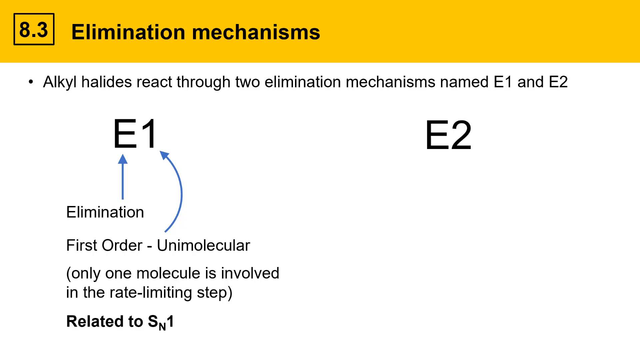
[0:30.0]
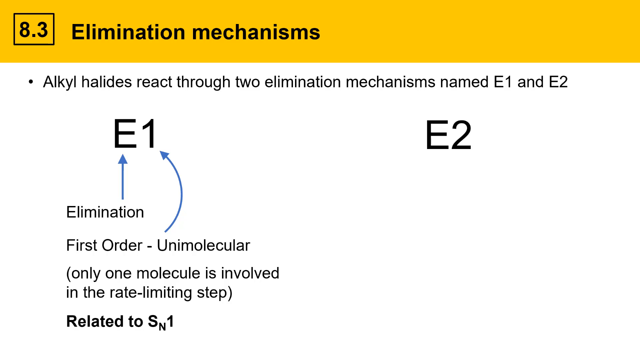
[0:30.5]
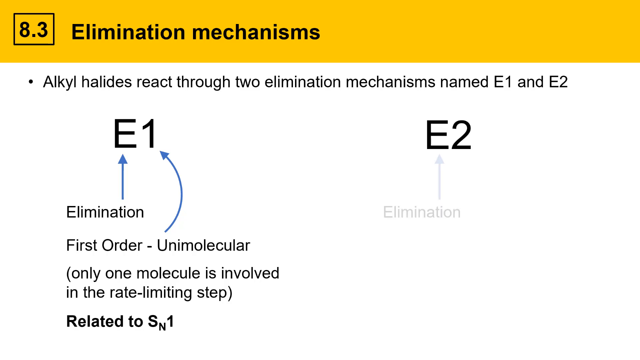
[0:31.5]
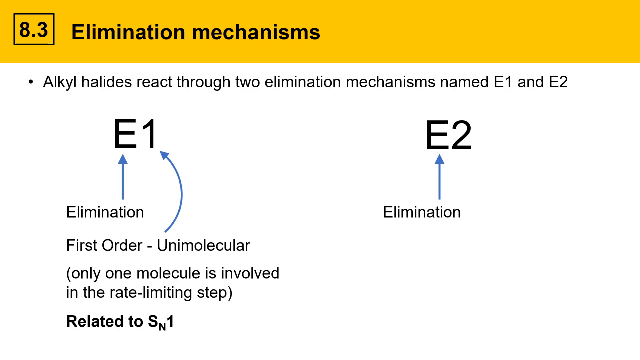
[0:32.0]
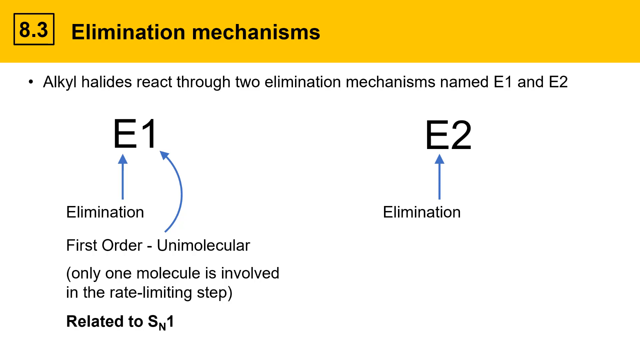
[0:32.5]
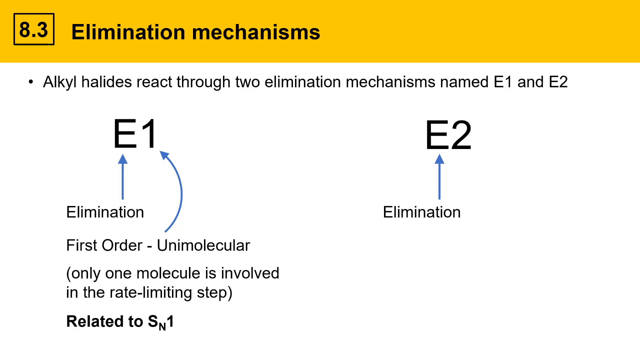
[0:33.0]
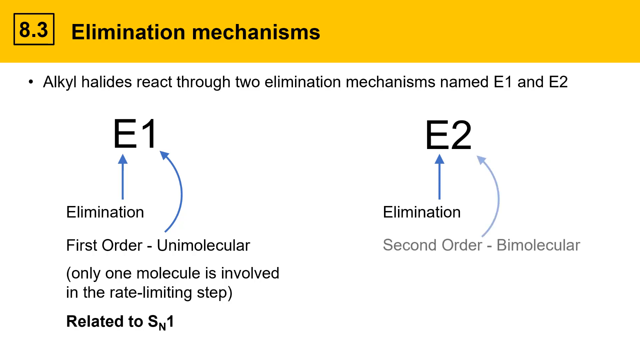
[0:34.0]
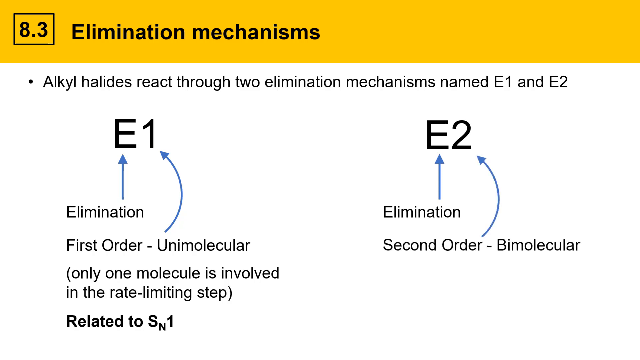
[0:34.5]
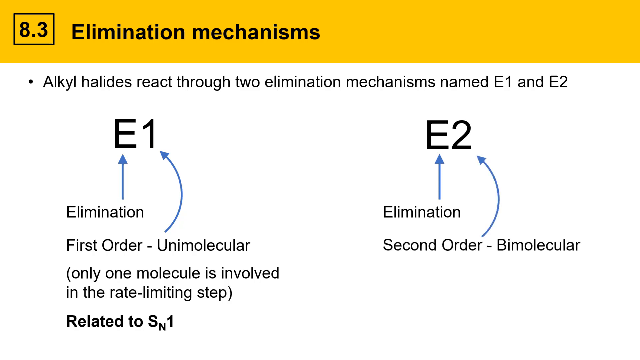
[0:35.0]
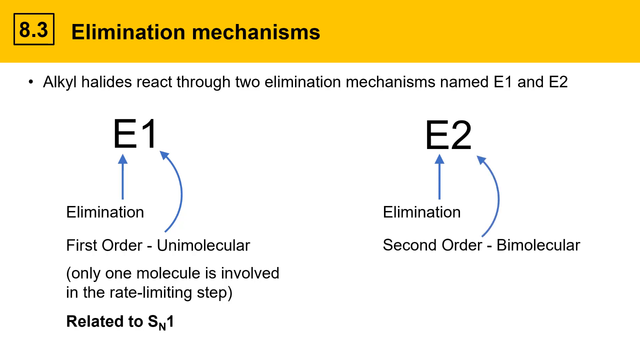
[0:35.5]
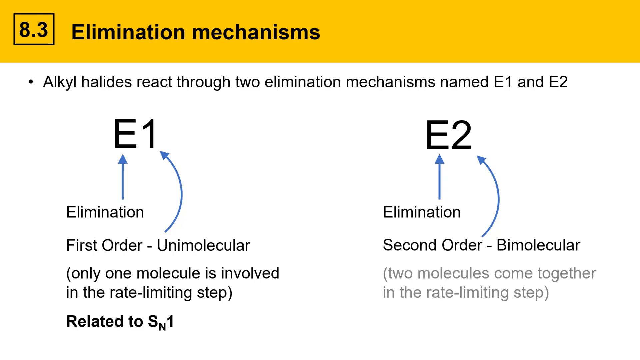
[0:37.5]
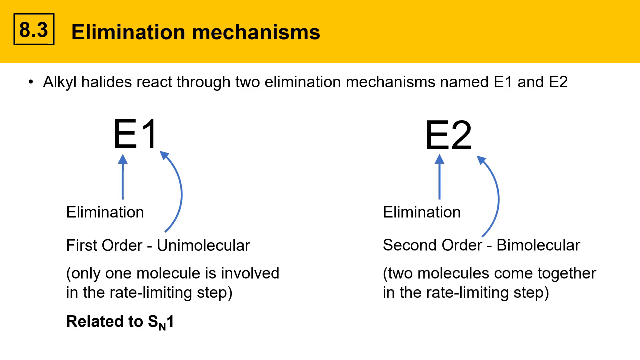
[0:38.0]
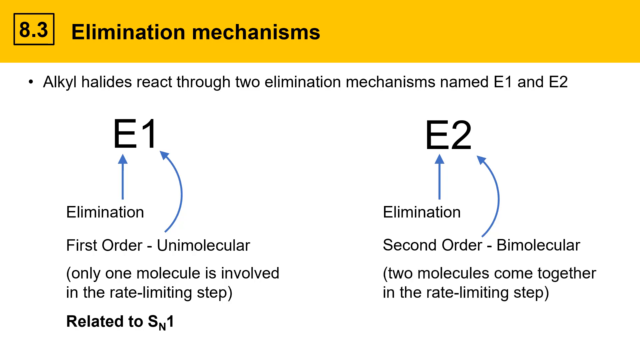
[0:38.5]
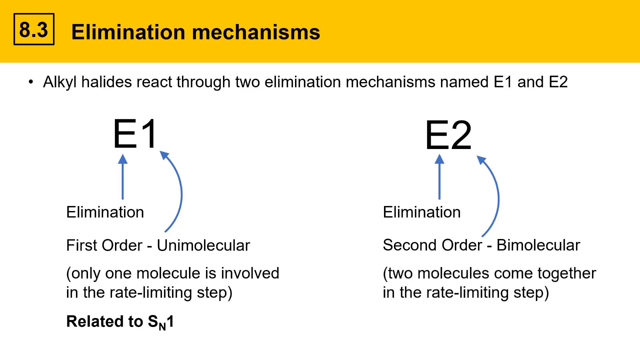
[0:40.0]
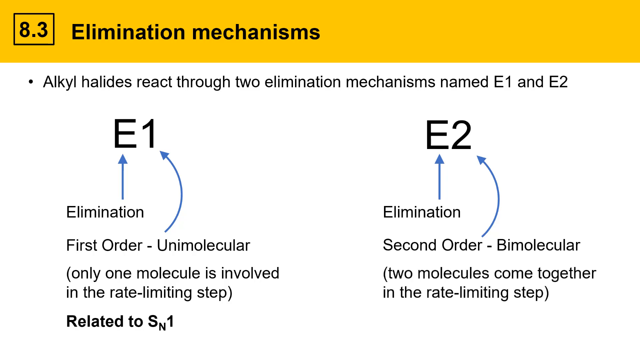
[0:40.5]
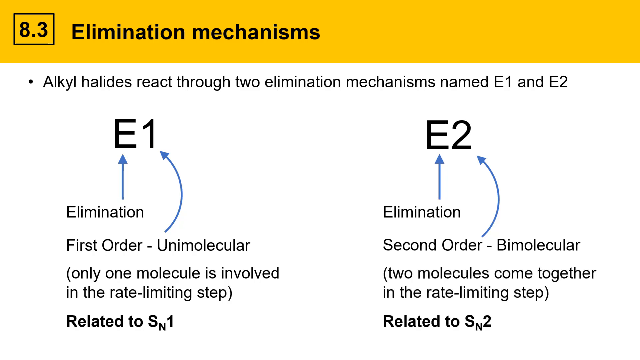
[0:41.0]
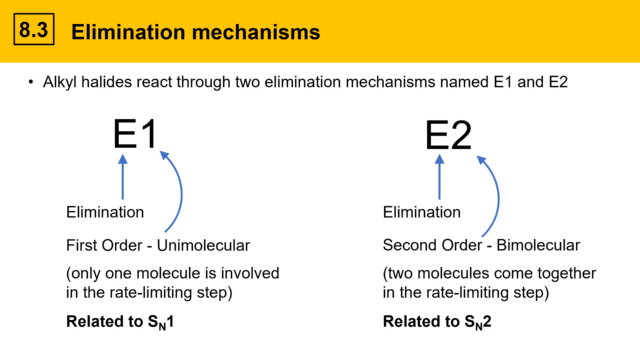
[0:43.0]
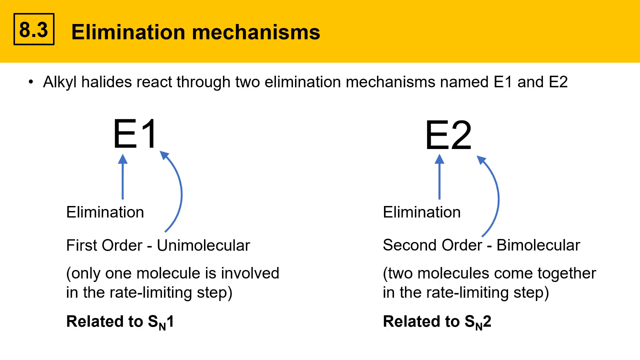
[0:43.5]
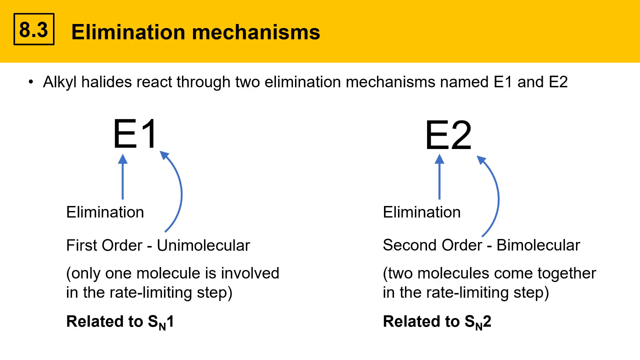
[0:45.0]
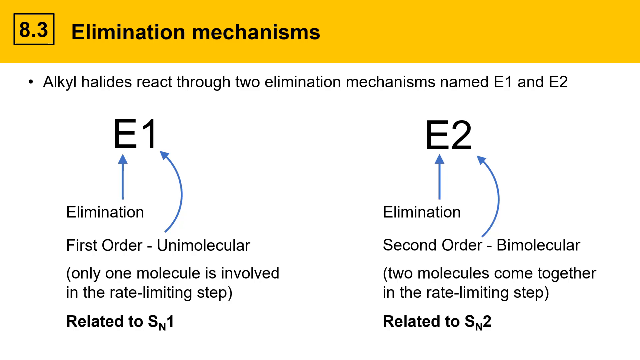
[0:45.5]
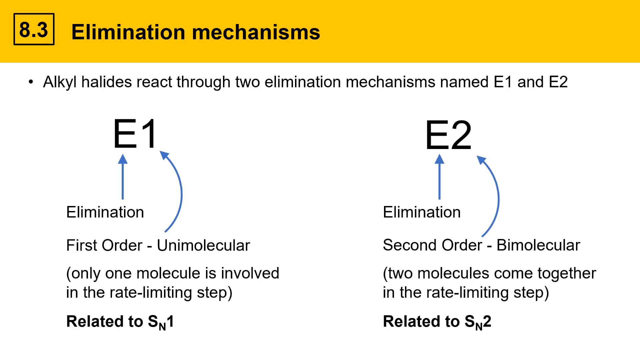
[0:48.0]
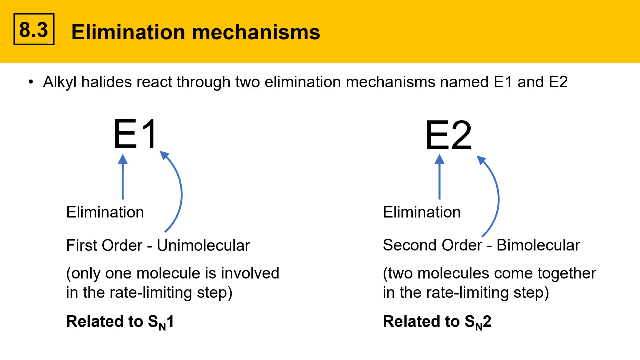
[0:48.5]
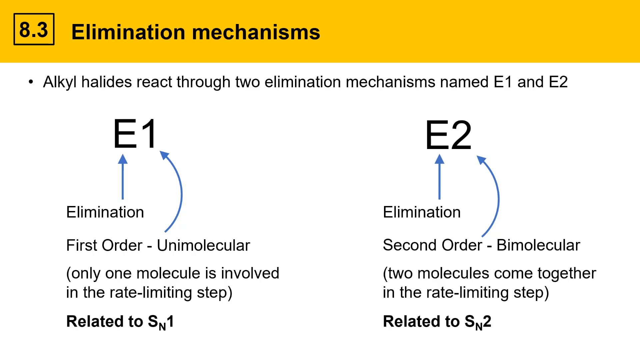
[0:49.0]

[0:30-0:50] The page with the elimination mechanisms text remains on screen, stating that alkyl halides react through two elimination mechanisms named E1 and E2. On the left is text reading "E1 elimination first order unimolecular. Only one molecule is involved in the rate limiting step related to SN1." On the right is text reading "E2 elimination second order biomolecular. two molecules come together in the rate limiting step related to SN2." The text is in black and white, and blue arrows point from the word "elimination" and "first order" to the word "E1" at the top.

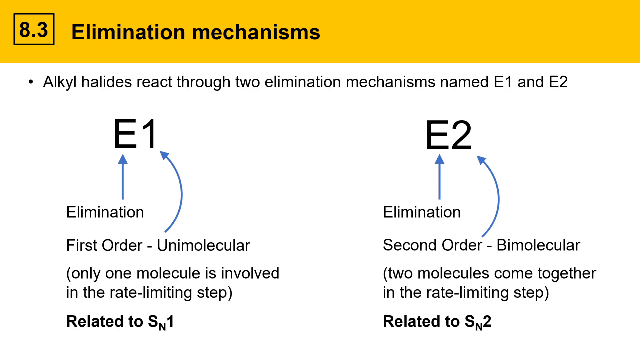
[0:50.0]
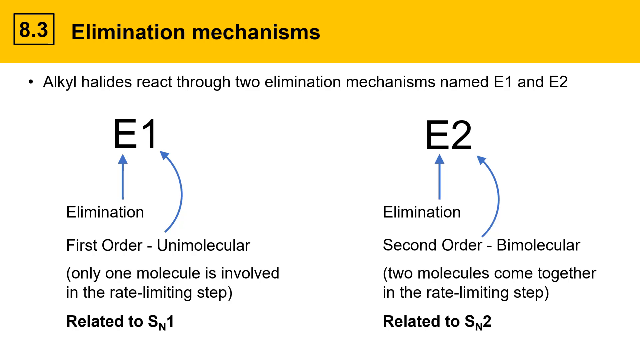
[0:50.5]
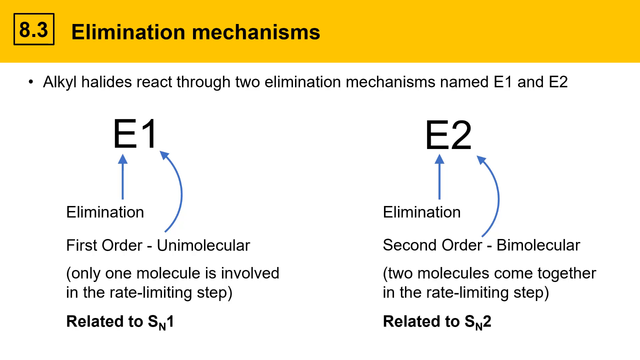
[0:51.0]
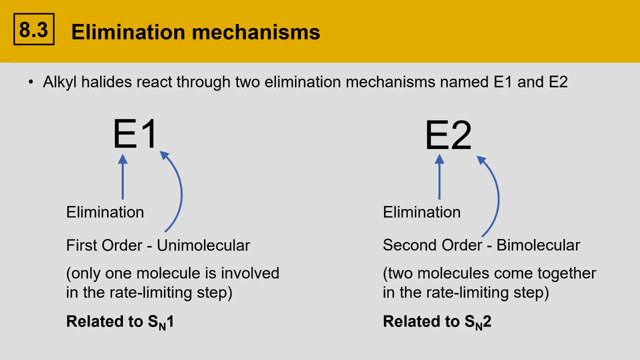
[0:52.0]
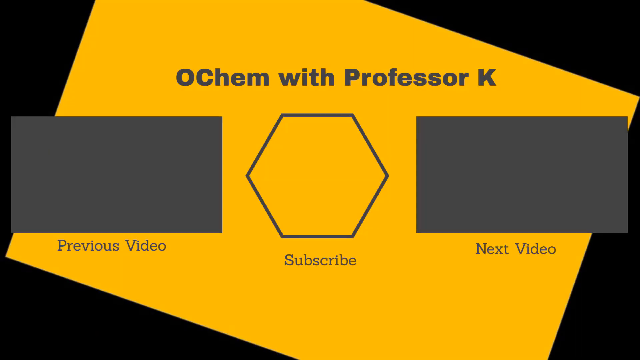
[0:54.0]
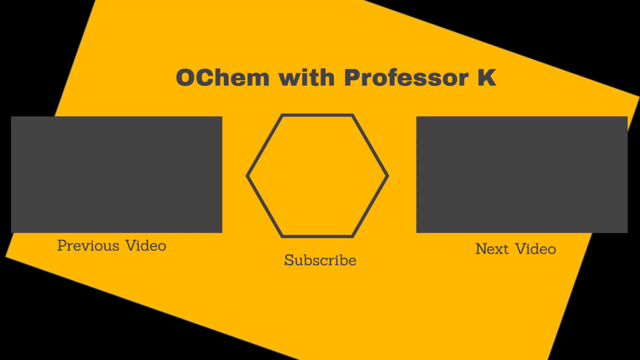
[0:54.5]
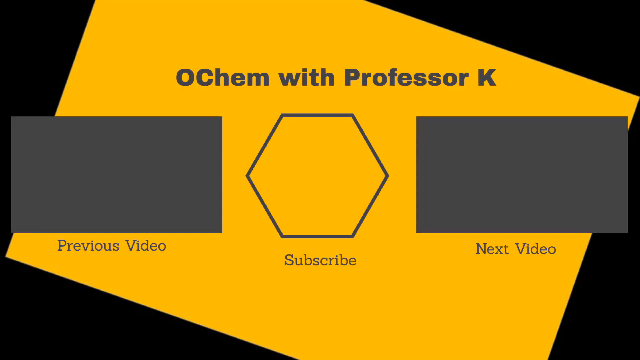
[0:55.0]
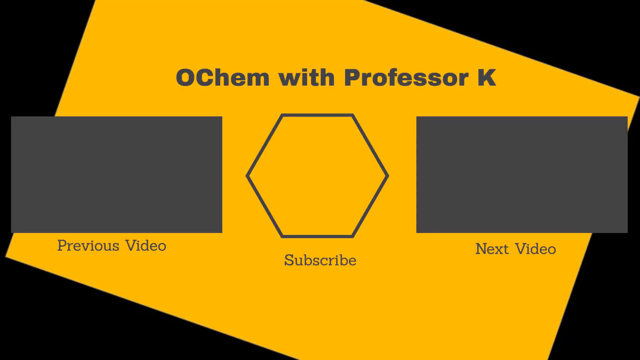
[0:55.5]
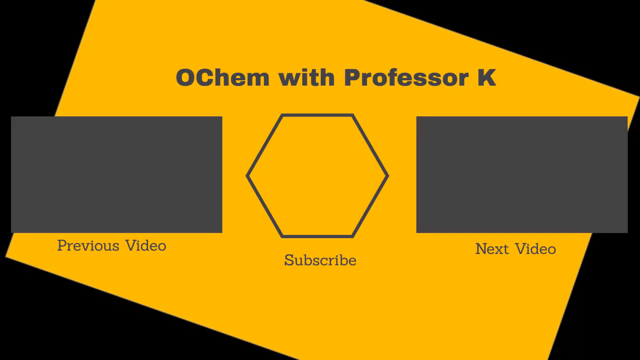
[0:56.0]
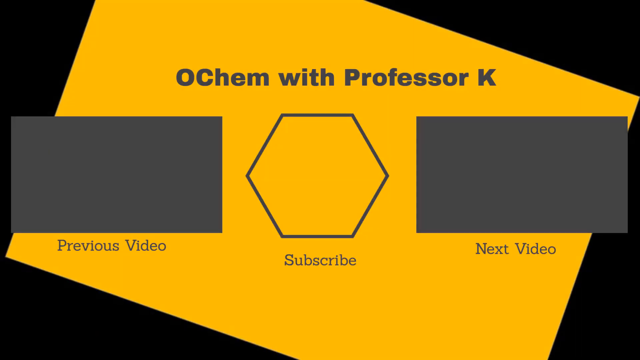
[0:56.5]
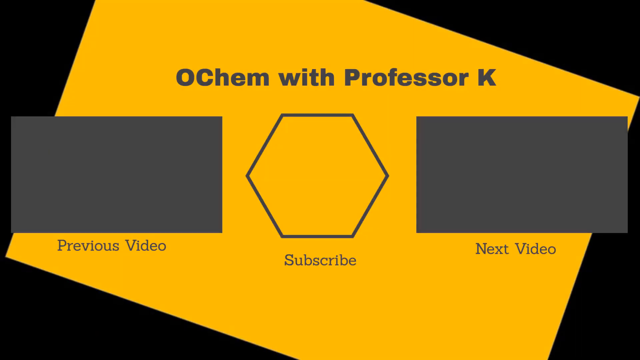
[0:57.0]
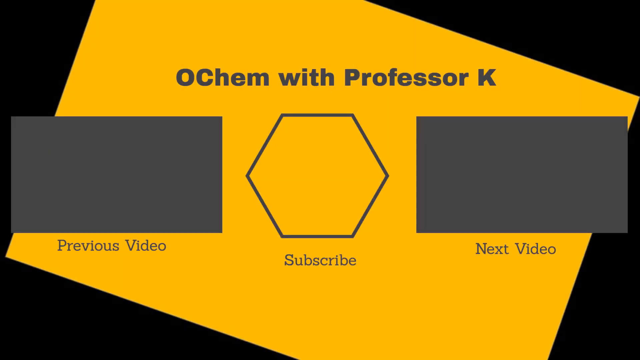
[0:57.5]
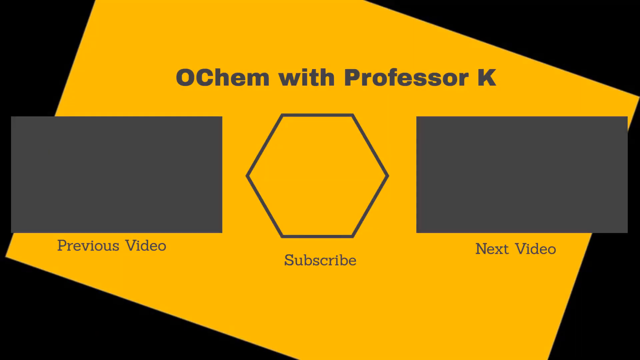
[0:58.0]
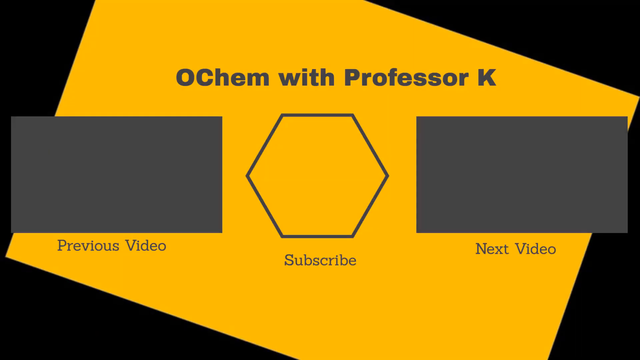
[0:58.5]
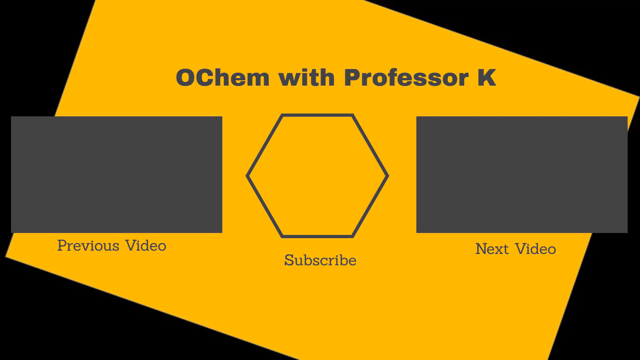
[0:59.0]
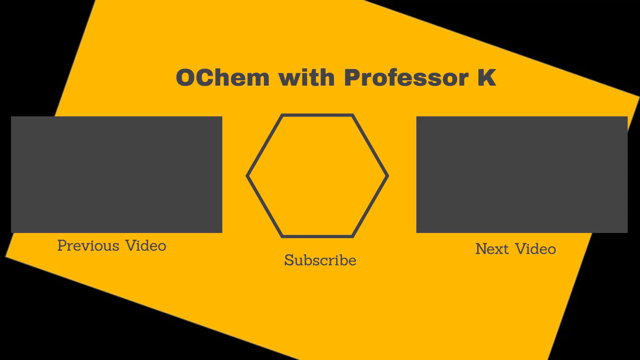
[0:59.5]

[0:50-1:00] The two texts, E1 and E2, are shown, and then the video switches to a different page in orange, gray and black with a caption reading "Zero Chem with Professor K". On opposite sides of a hexagon are two triangles, with "previous video" on the left and "next video" on the right, and "subscribe" on the hexagon between the two triangles.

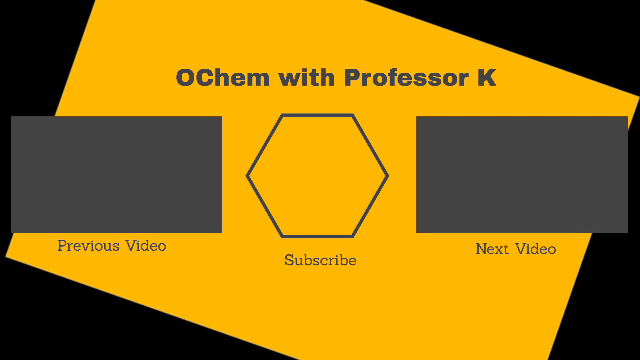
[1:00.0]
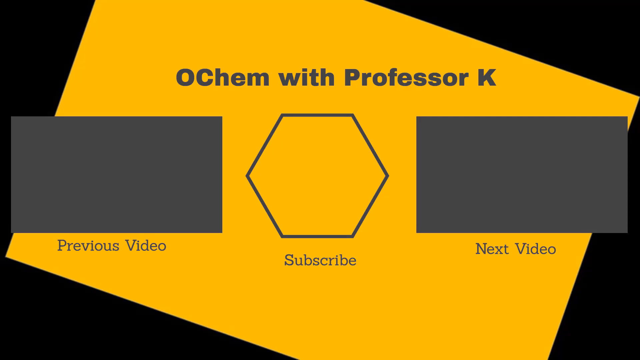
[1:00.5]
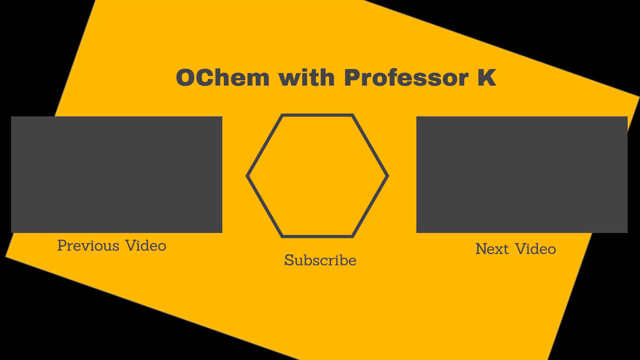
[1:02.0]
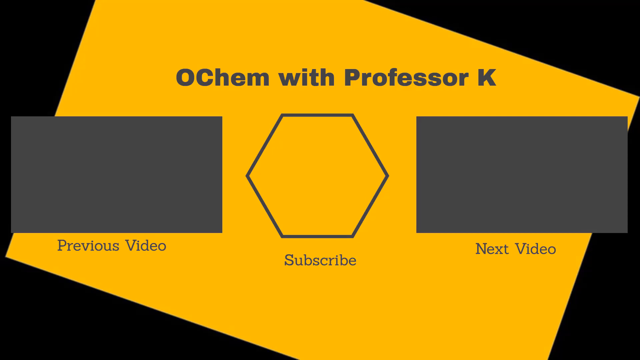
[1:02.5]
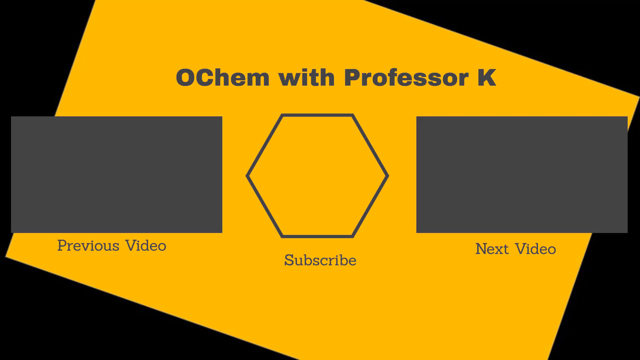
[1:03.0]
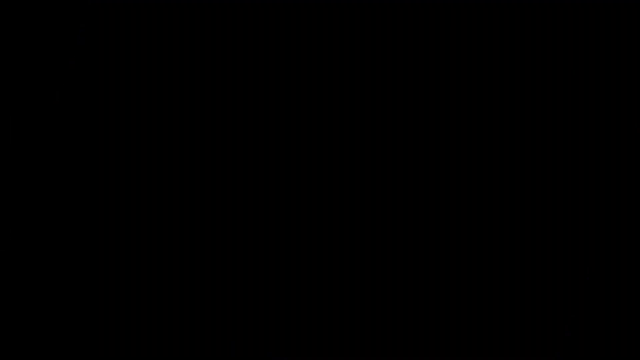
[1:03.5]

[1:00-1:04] The page reading "Zero Chem with Professor K" is still shown, with a hexagon in the middle and two triangles on its left and right sides; the left one says "previous video" and the right one says "next video". Below the hexagon there is a hexagon that says "subscribe". This appears briefly until the video ends. It seems to be an advert for the professor who presumably wrote the lecture slides.